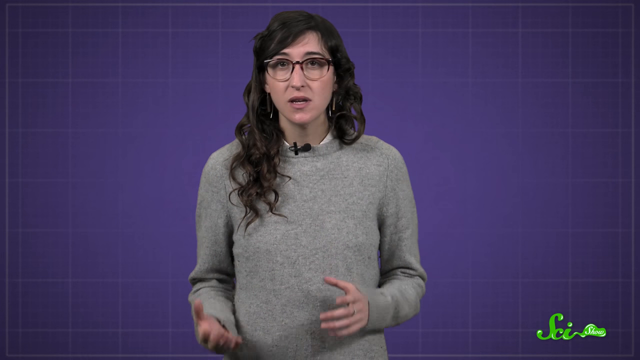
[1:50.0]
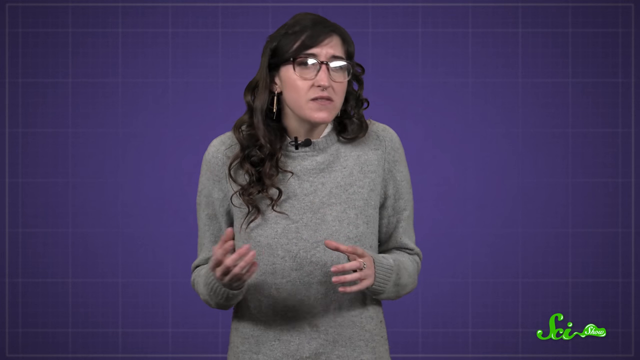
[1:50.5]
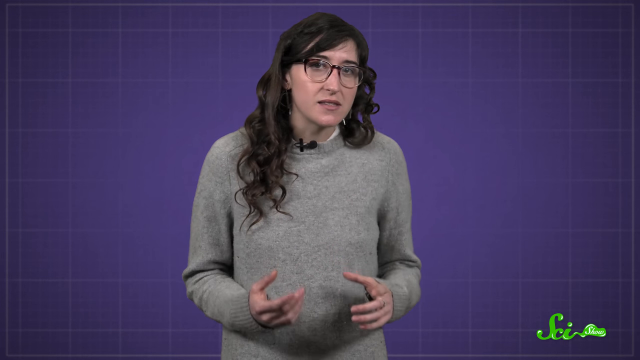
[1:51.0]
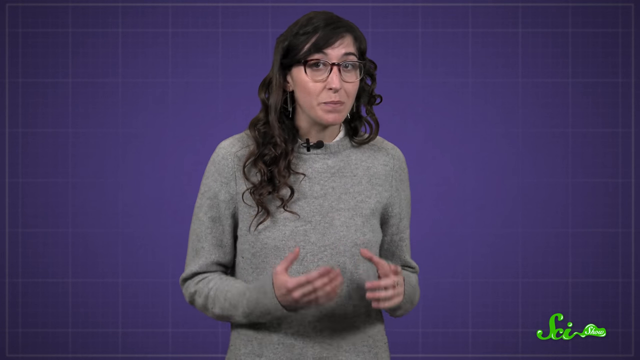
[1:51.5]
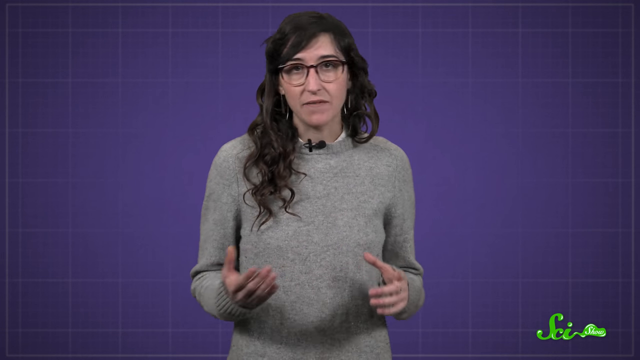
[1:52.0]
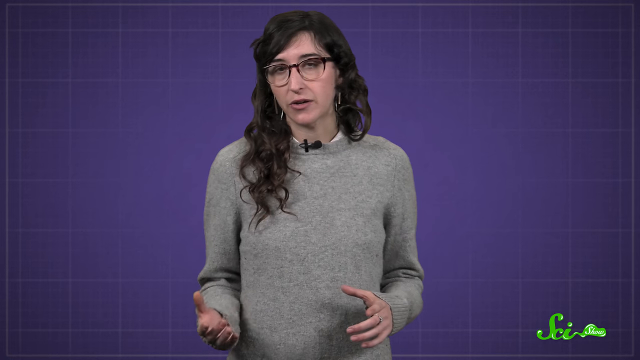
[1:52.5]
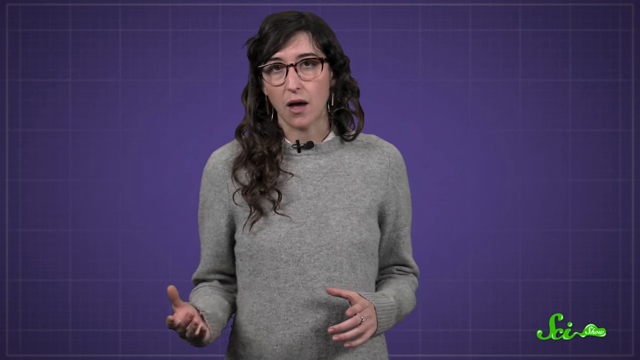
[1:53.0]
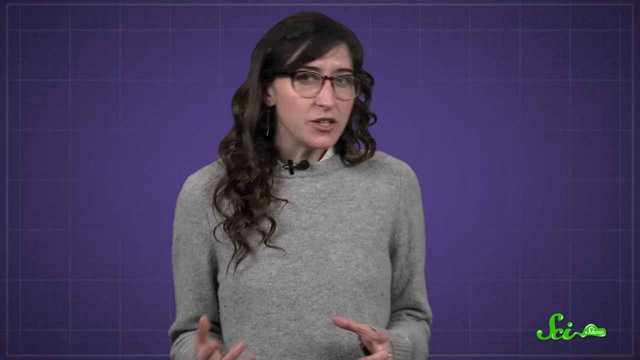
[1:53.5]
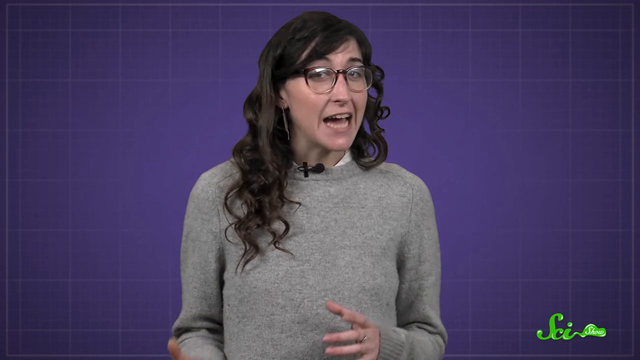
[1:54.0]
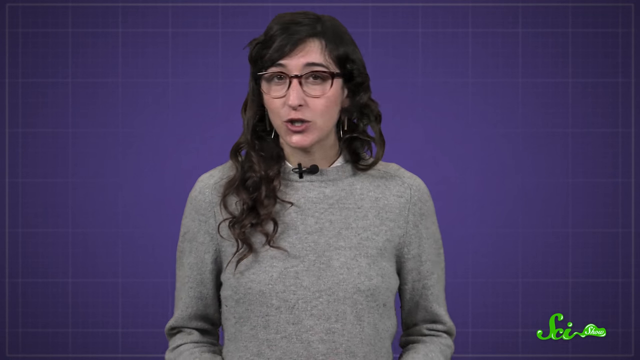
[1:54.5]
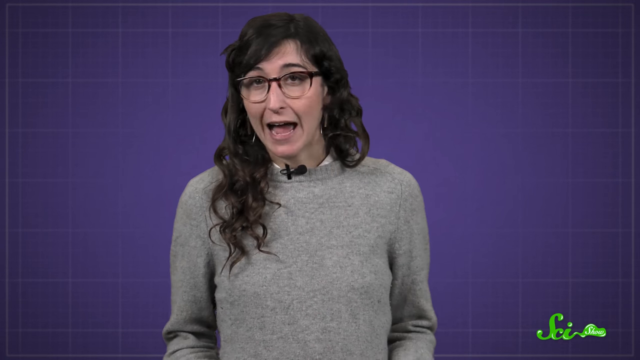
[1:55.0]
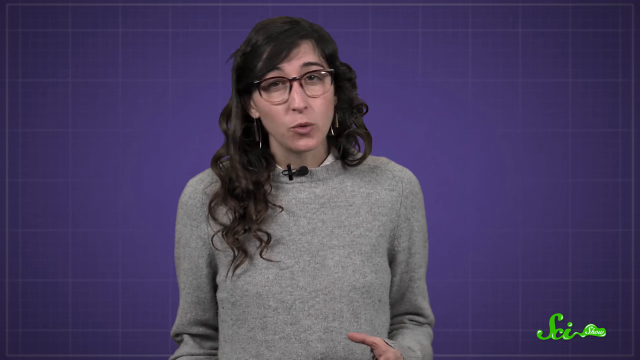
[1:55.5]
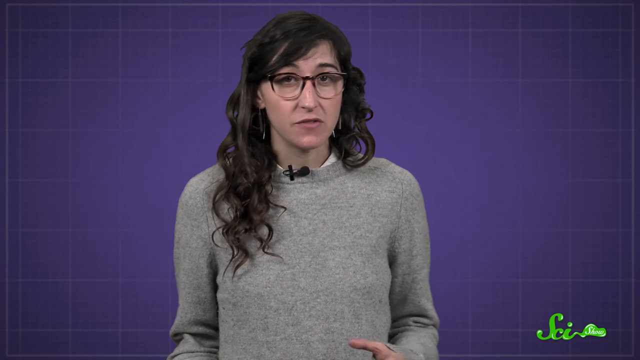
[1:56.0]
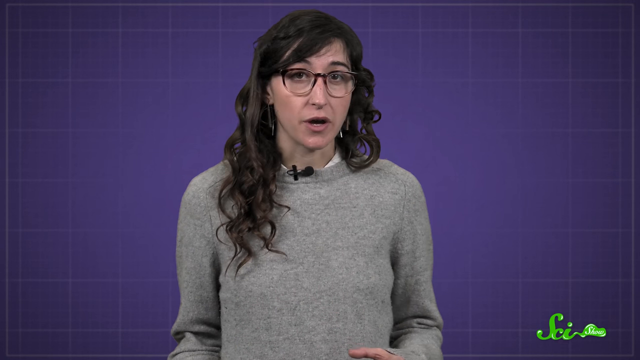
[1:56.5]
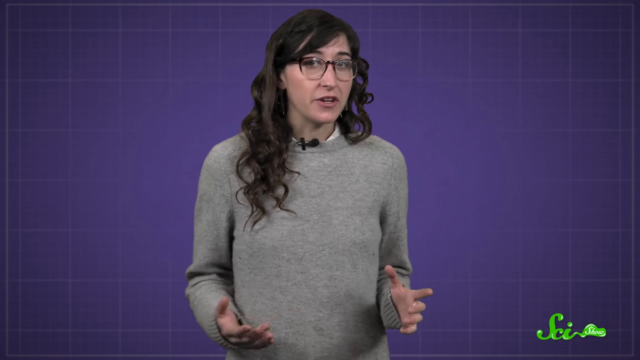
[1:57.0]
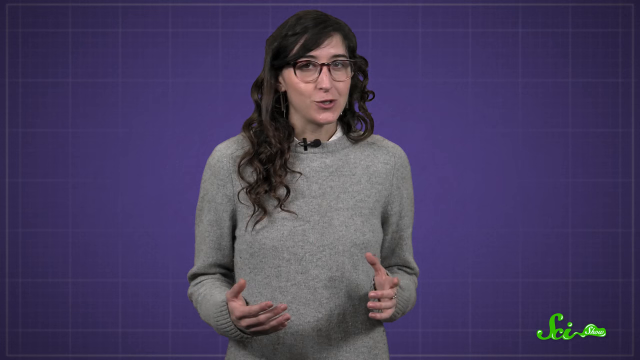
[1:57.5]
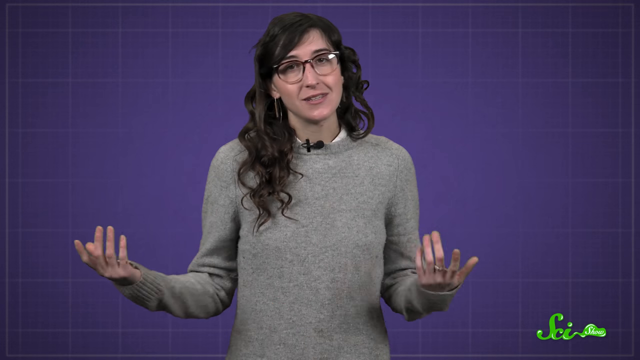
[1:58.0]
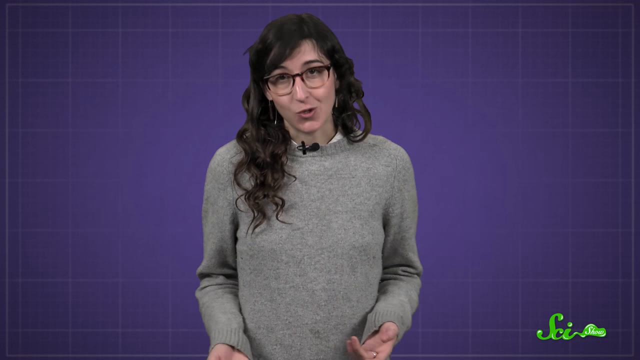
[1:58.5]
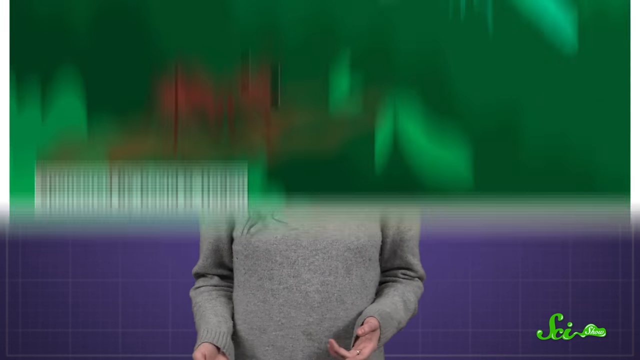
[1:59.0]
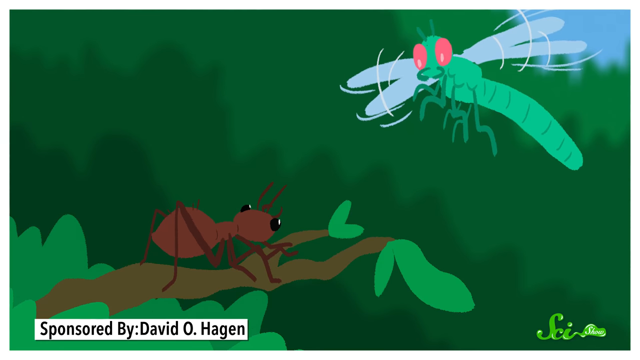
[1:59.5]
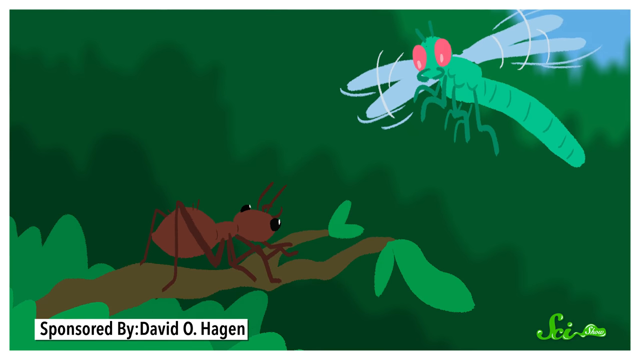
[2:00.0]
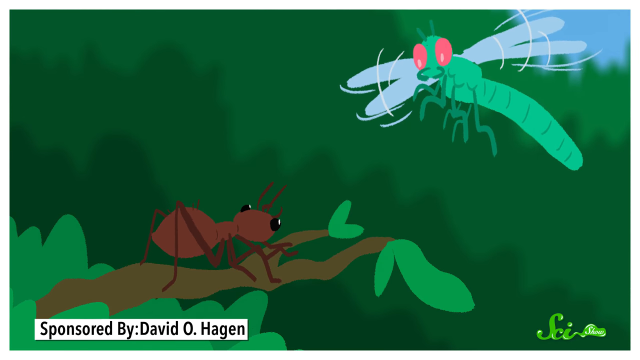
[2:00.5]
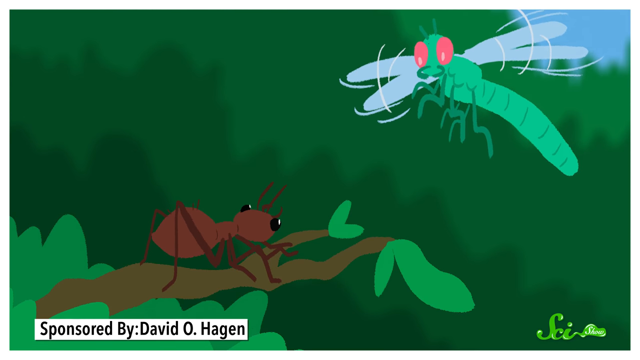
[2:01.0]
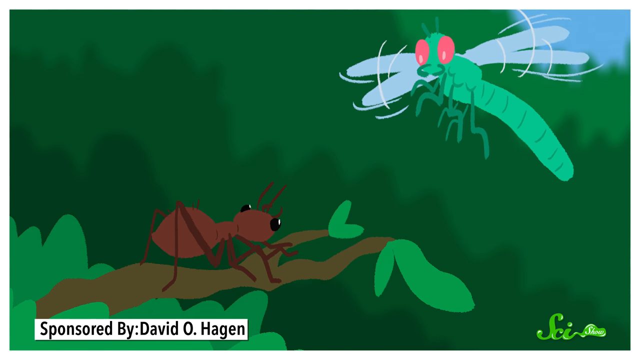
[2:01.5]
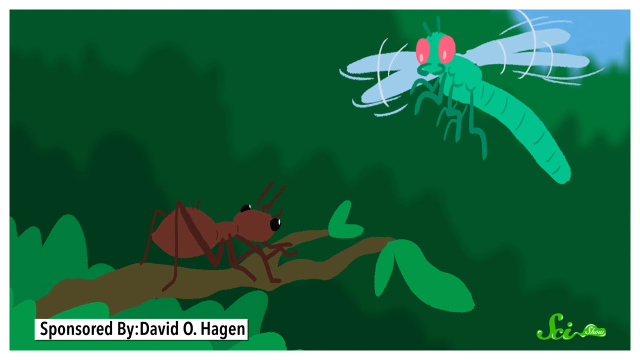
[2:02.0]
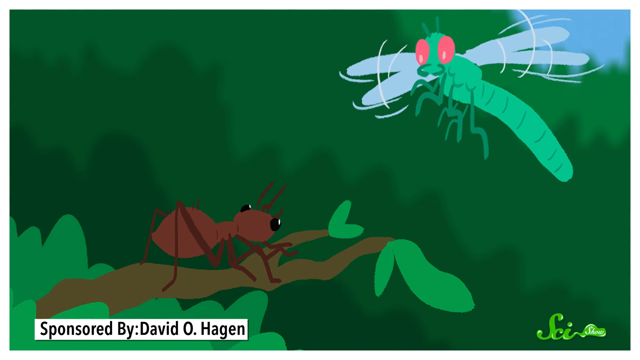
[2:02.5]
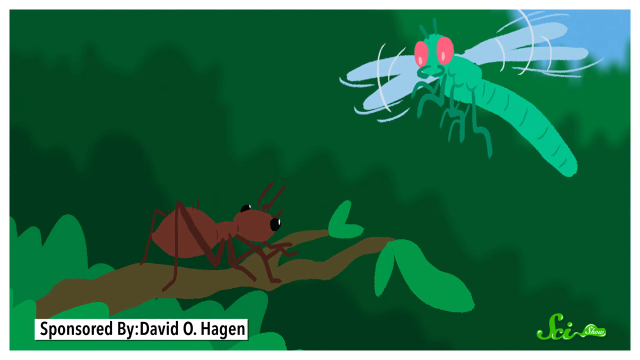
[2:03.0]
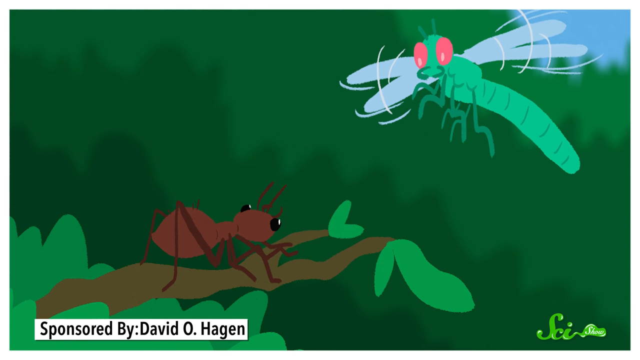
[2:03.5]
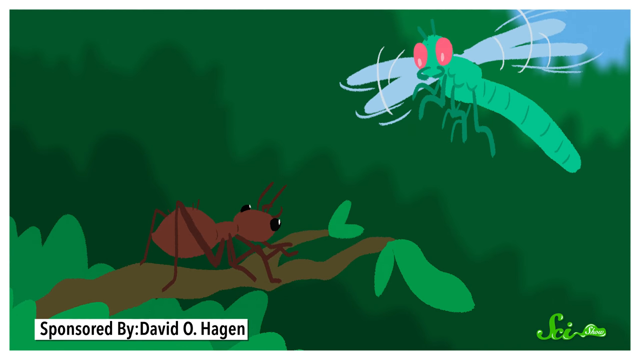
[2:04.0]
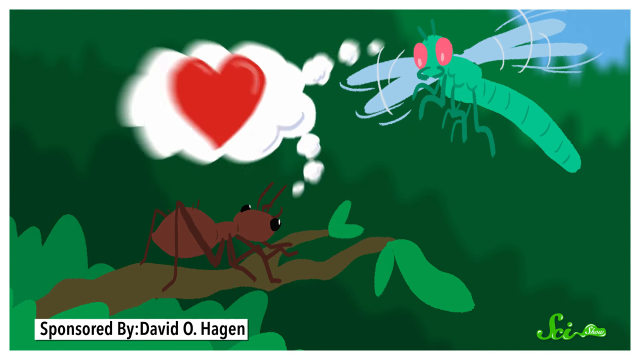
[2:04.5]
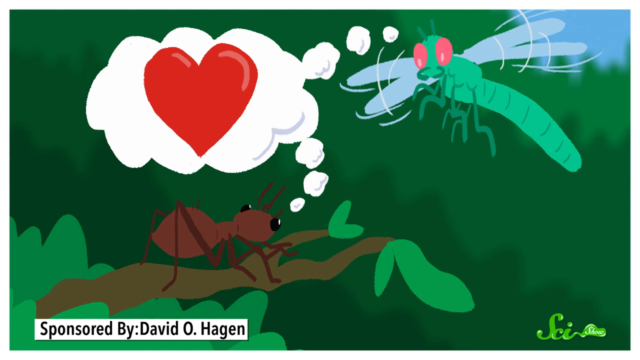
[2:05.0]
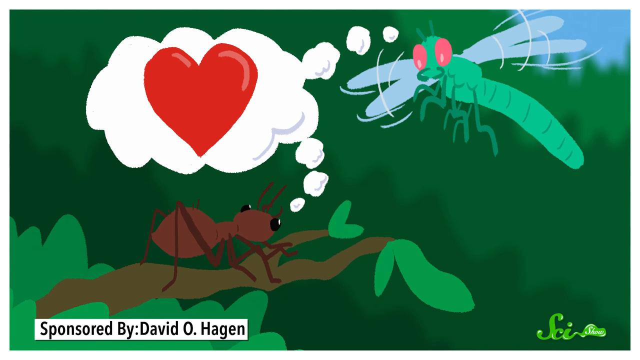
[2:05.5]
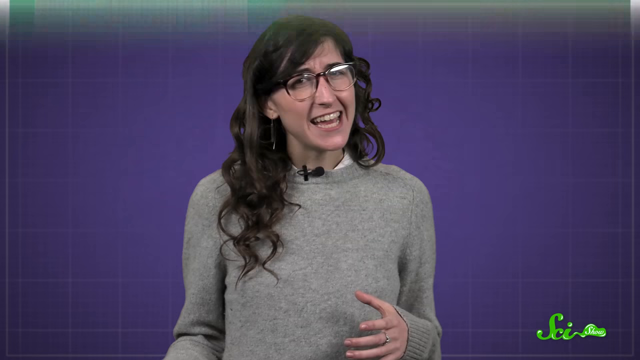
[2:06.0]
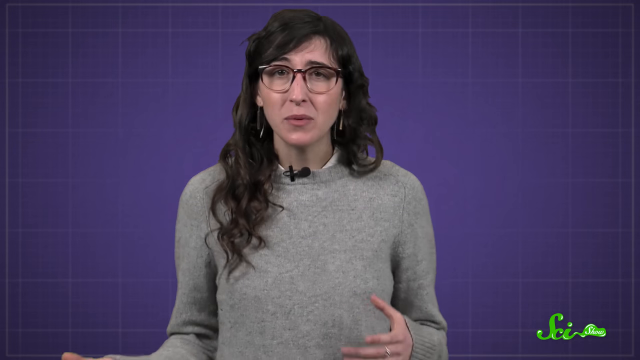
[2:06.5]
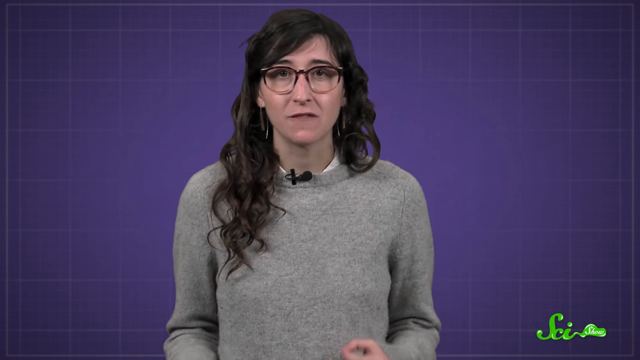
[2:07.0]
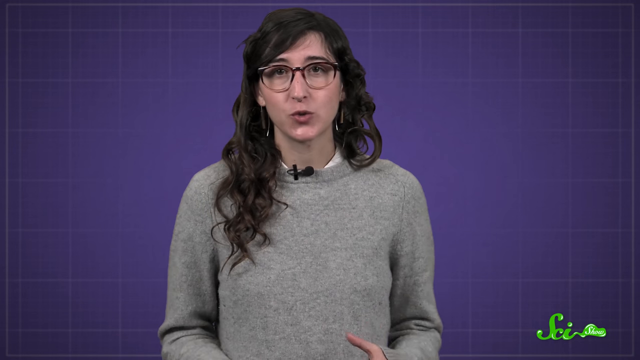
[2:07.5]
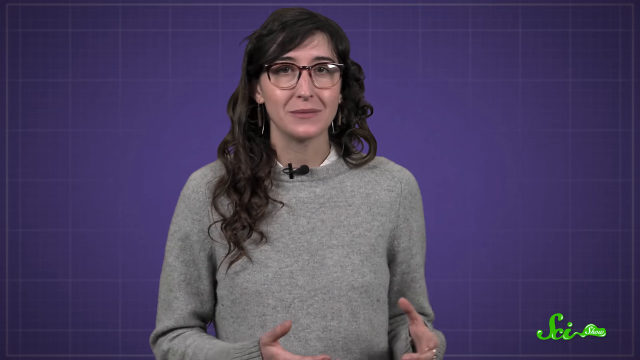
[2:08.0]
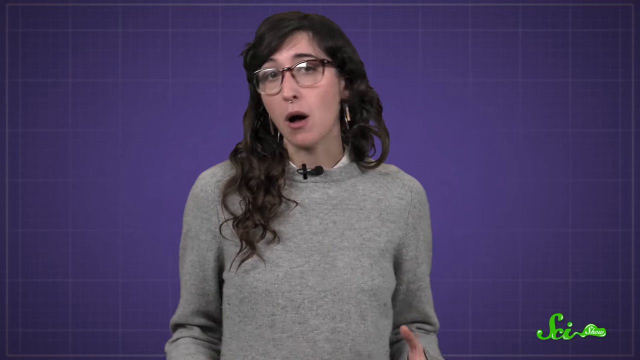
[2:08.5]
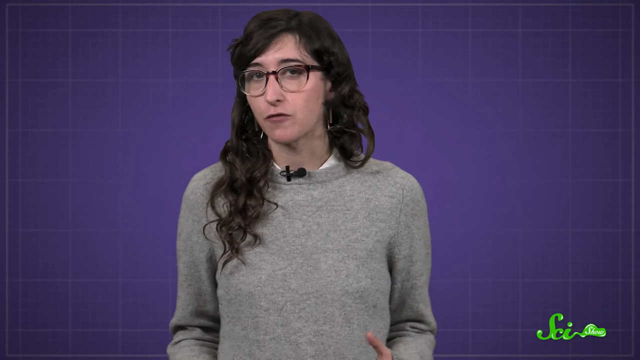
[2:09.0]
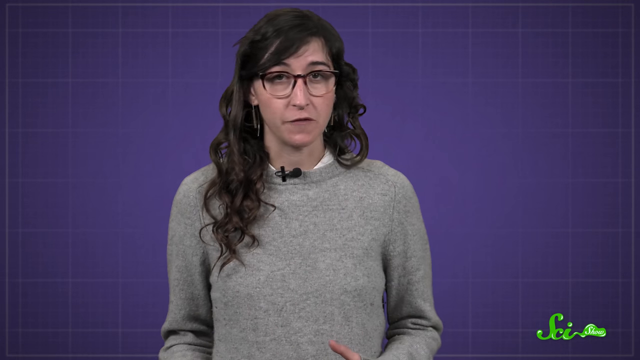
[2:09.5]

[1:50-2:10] The woman is talking in front of a purple grid of squares, kind of like a math grid. The video then cuts to a cartoon of what appears to be a dragonfly flying, with green in the background and possibly an ant on a branch. The dragonfly kind of rotates up and down and side to side; the dragonfly is in love, and so is the ant, and they love each other. The video then returns to the woman, who is probably explaining the ant and the dragonfly.